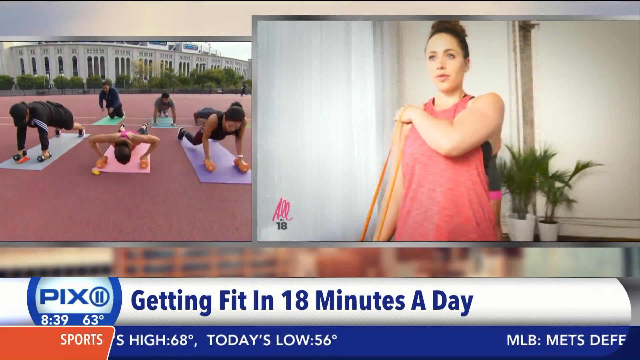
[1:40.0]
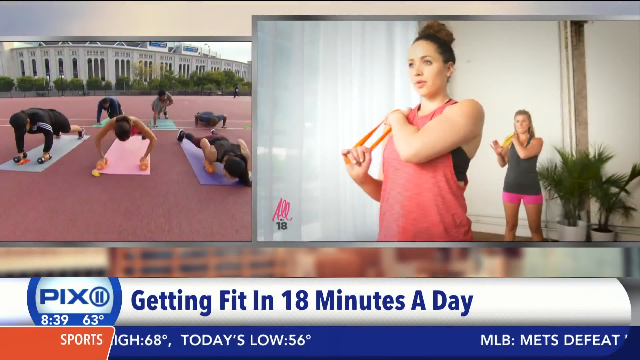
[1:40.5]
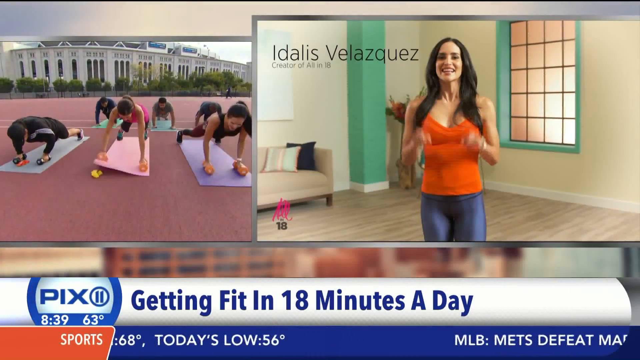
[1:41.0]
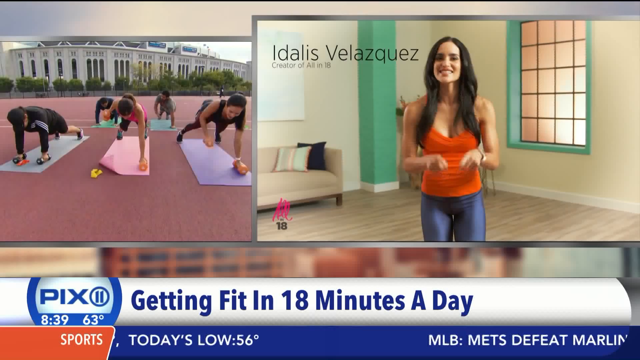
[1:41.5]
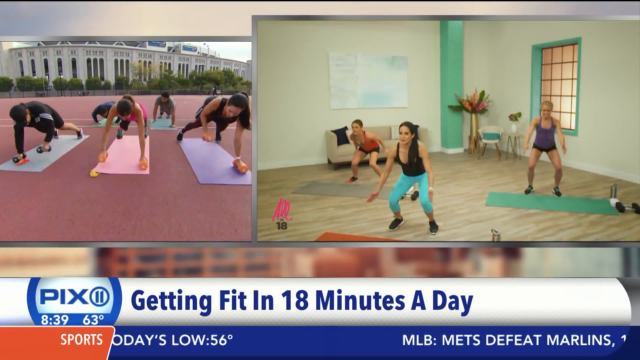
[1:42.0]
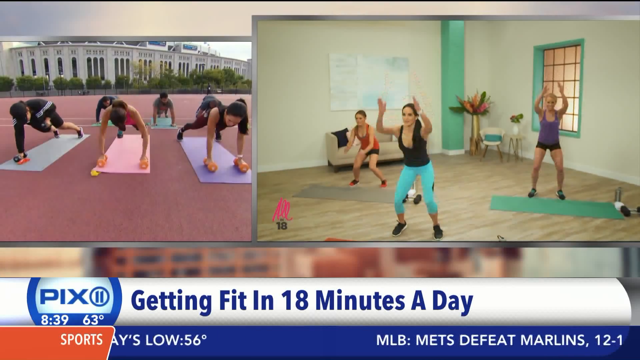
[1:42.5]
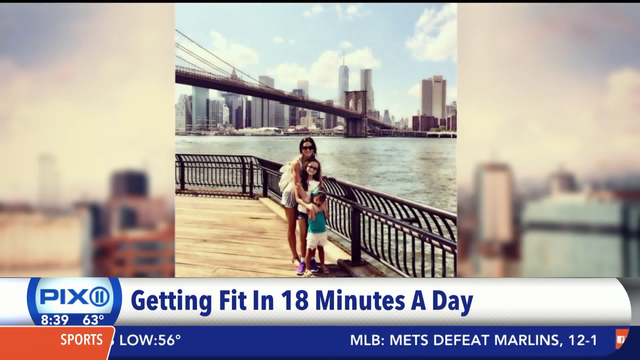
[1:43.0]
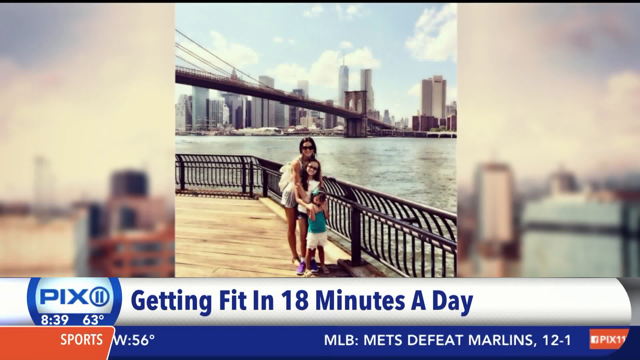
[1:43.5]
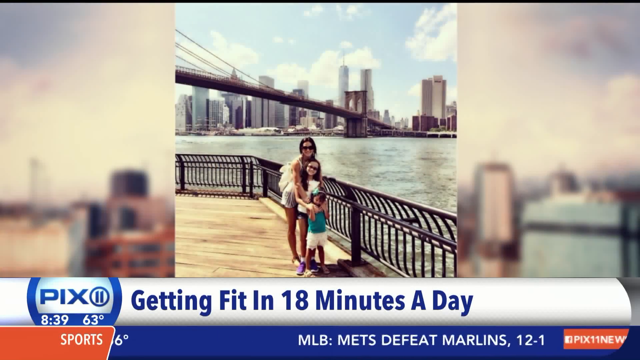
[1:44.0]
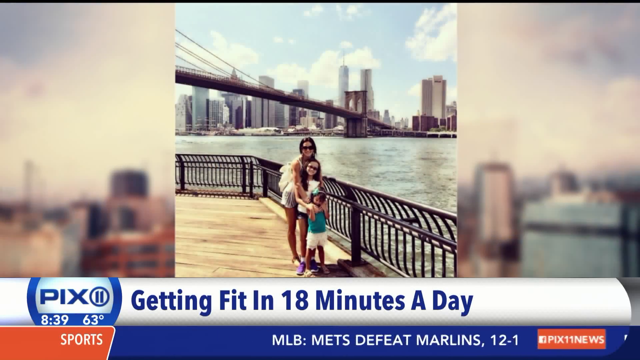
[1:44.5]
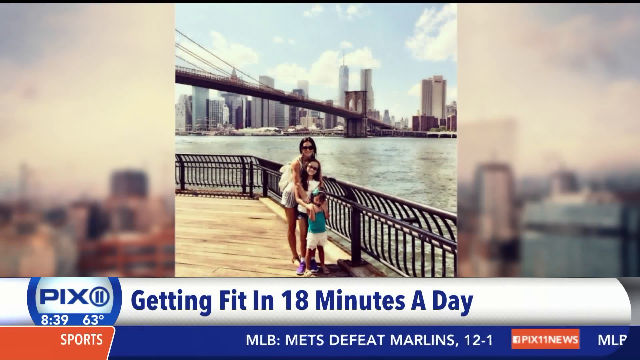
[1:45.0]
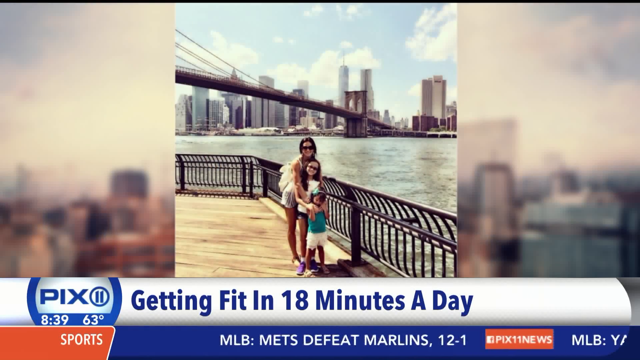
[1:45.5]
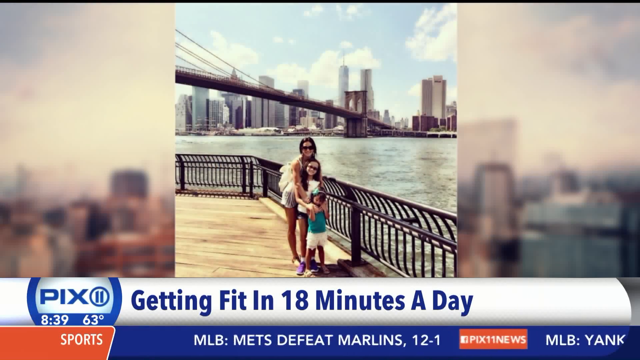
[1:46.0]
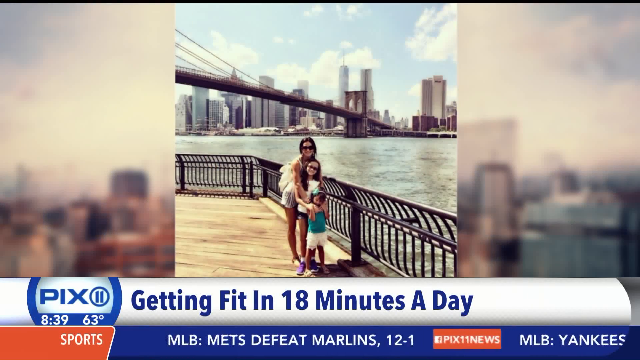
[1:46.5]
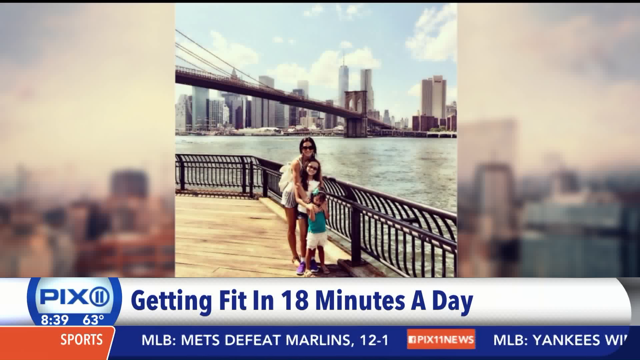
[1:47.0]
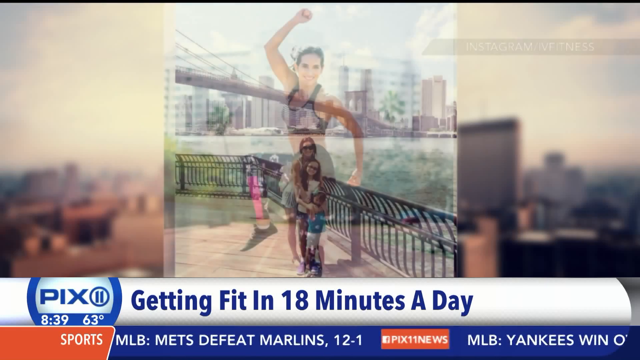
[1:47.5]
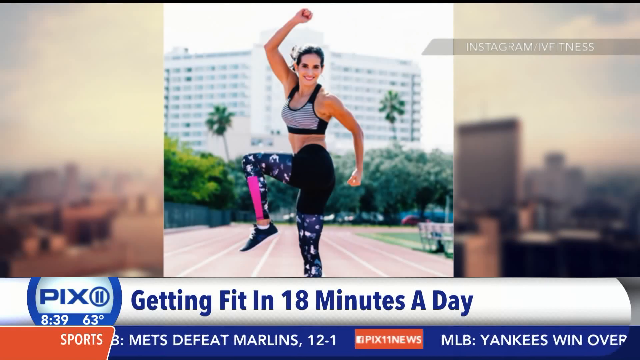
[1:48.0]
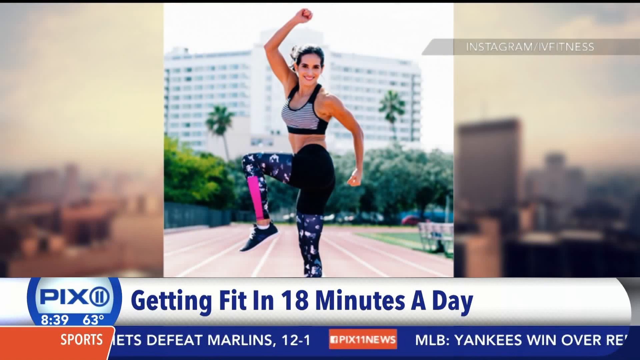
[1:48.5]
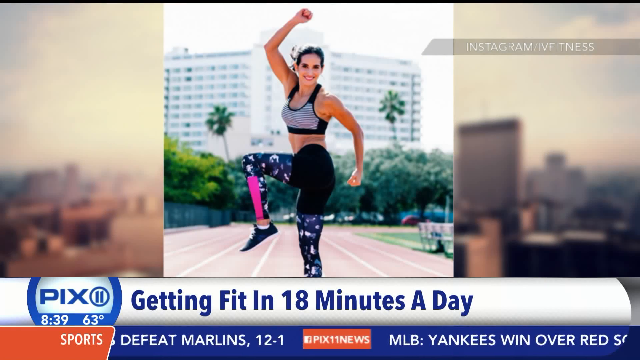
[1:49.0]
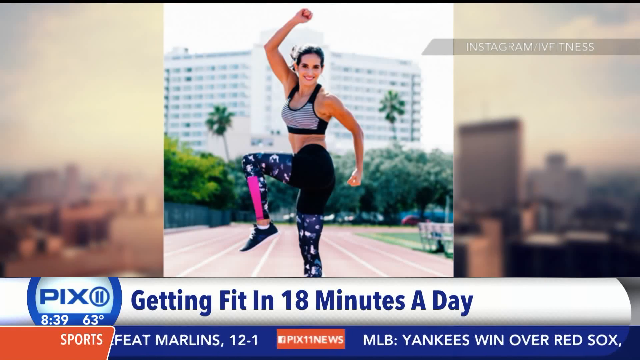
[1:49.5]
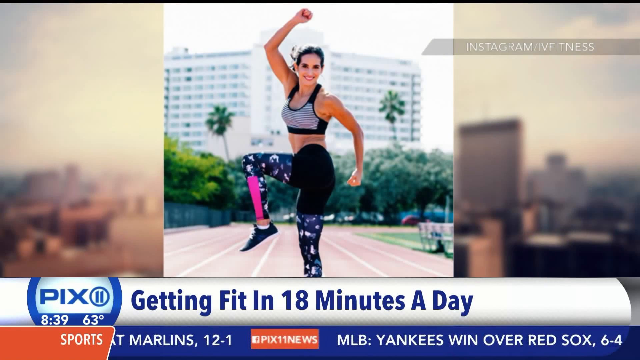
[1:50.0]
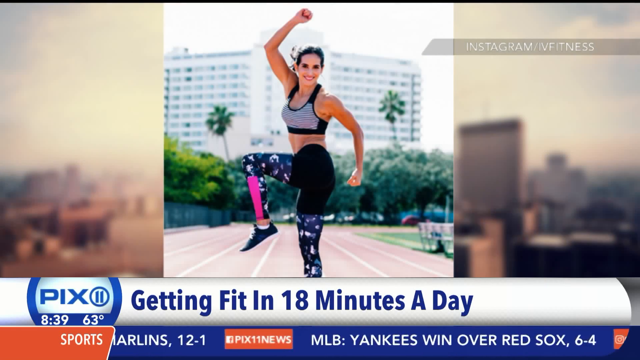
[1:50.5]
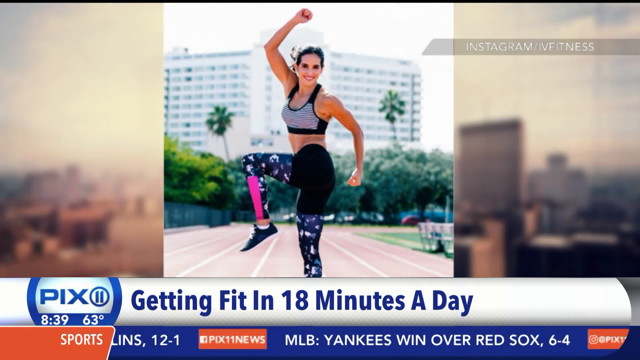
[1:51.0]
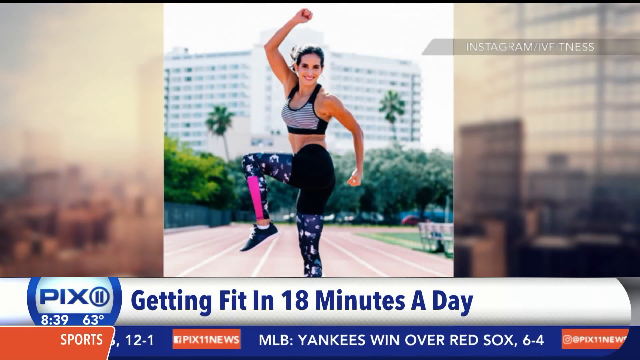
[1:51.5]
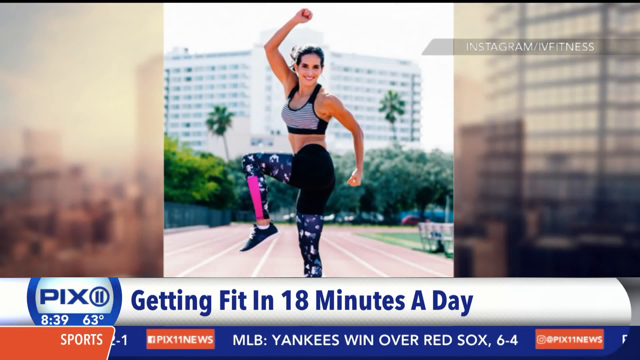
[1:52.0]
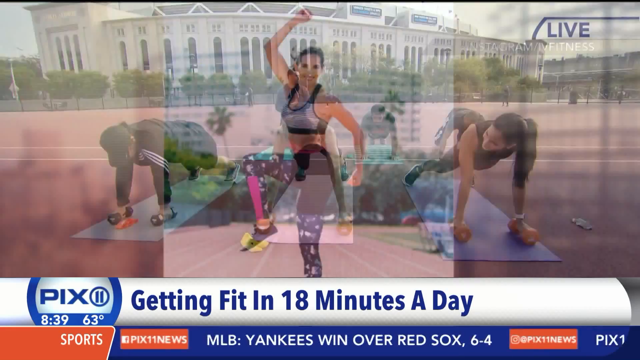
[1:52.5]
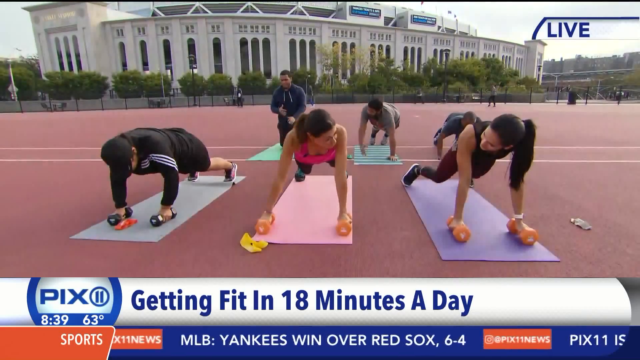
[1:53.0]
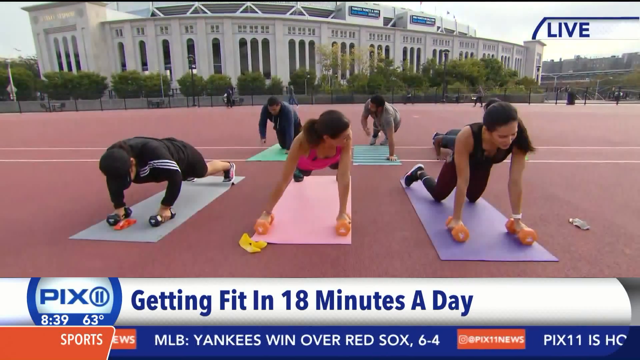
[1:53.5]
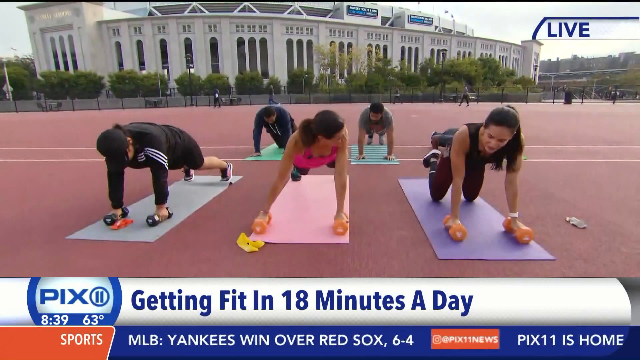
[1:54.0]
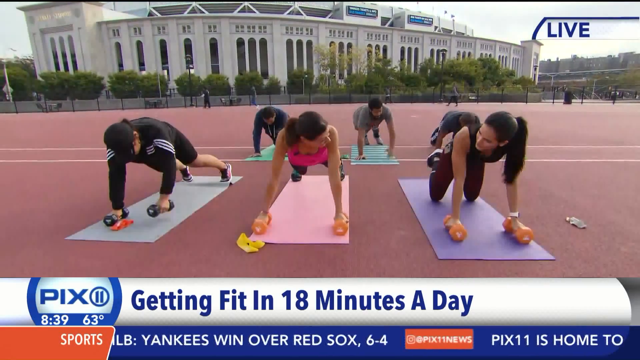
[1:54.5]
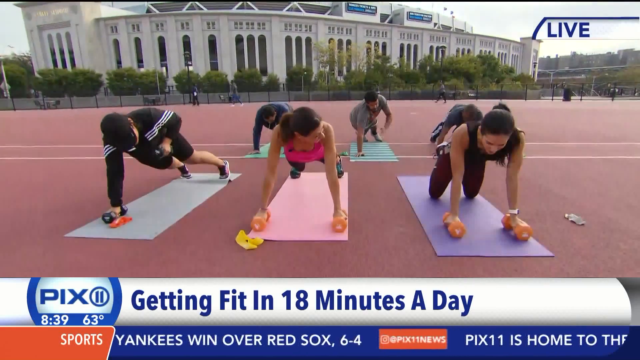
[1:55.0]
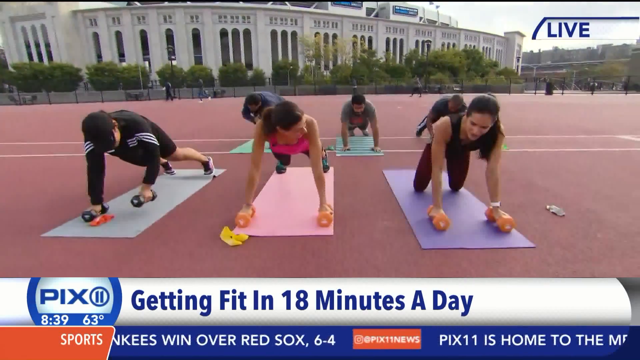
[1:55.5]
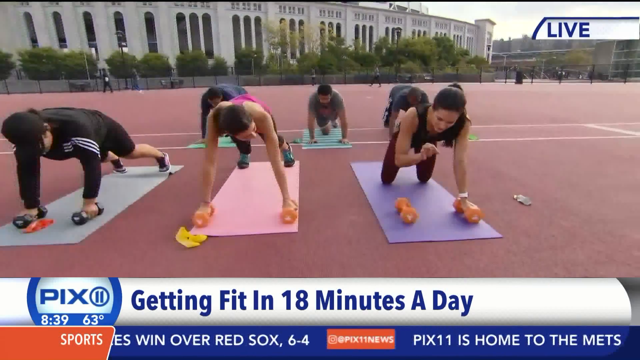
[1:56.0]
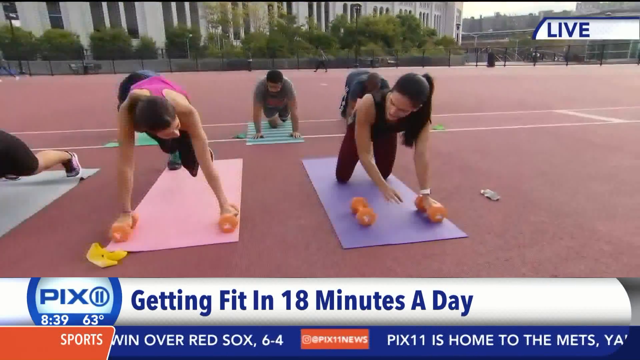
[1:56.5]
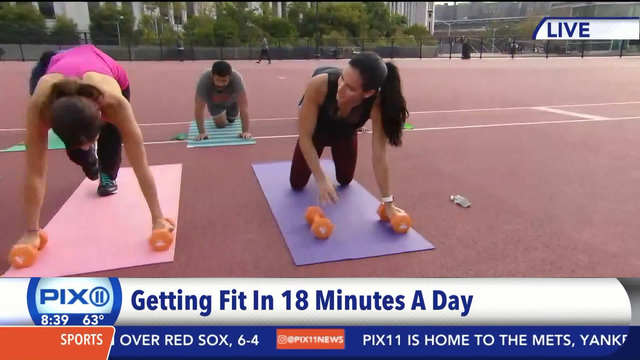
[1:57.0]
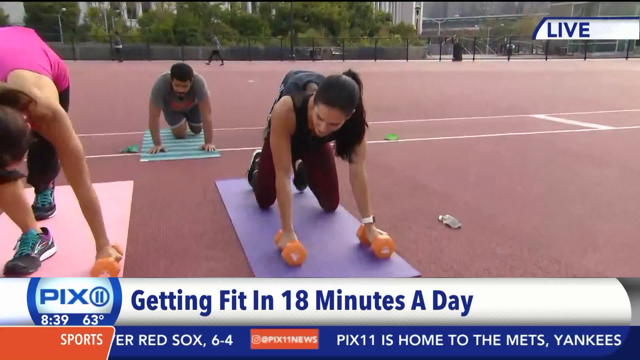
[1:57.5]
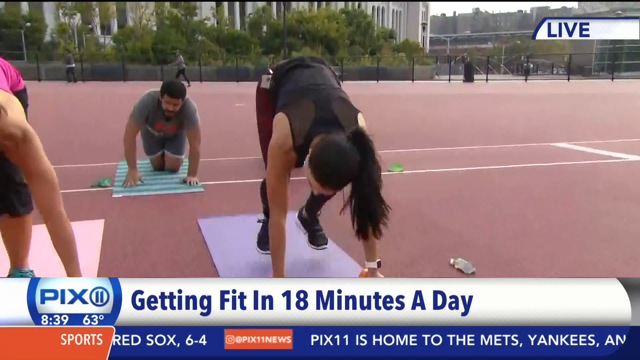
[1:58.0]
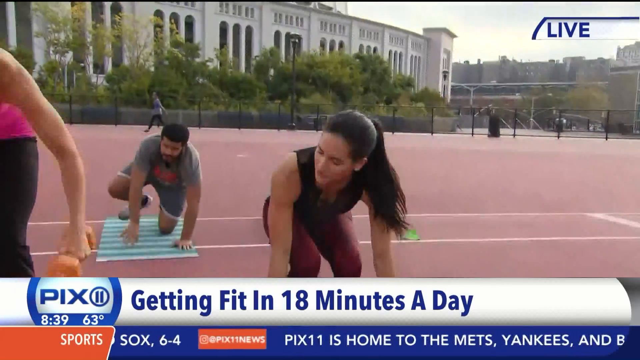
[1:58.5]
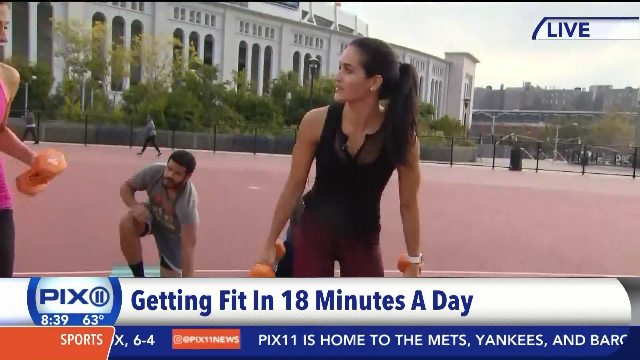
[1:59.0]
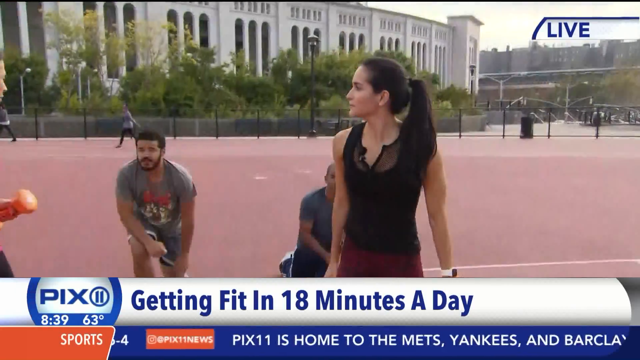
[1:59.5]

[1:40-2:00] A split screen shows, on the left, the person exercising with Elisa, using dumbbells and a mat while doing push-ups with the dumbbells, and on the right, other people exercising at home, mostly doing bodyweight exercises and jumps. A sequence of photos follows that seems to show a person who appears overweight following this way of getting fit in 18 minutes a day. The camera returns to the people in the park, where Elisa and the woman on the left interact with each other; Elisa then seems to stand up, and all the others seem to stand up as well, apparently having finished.